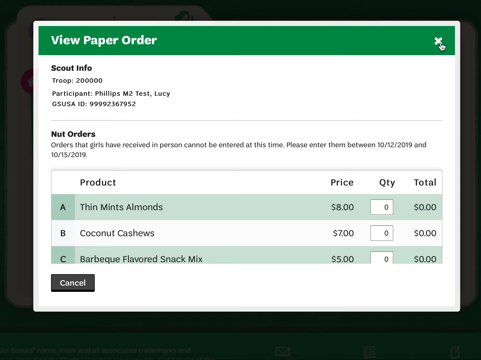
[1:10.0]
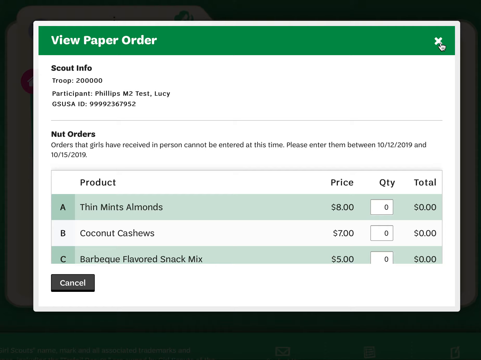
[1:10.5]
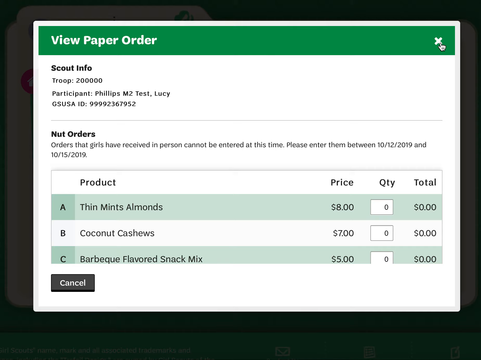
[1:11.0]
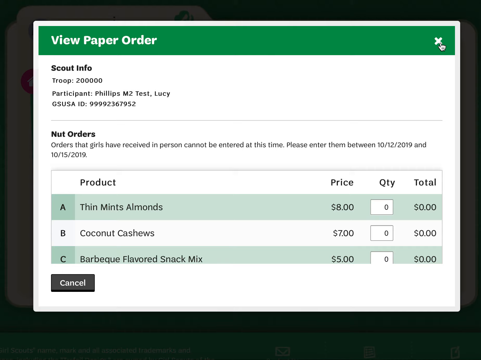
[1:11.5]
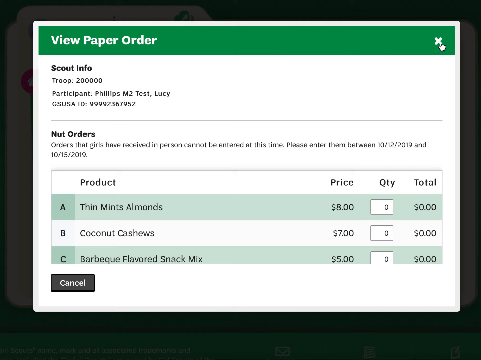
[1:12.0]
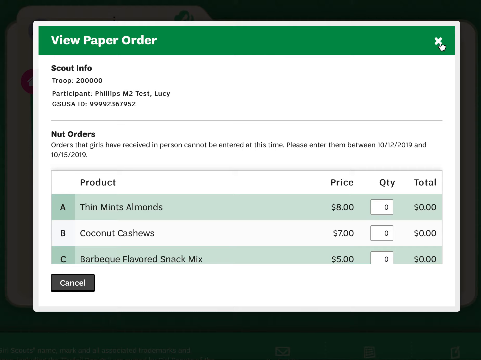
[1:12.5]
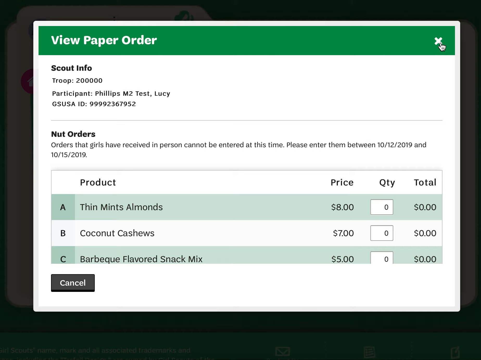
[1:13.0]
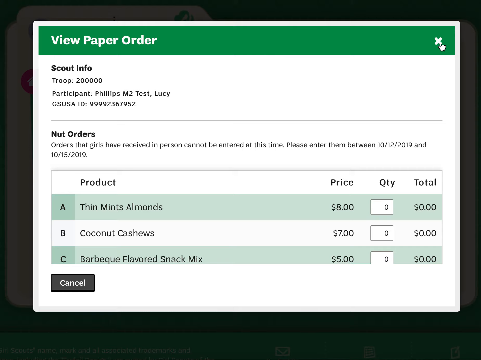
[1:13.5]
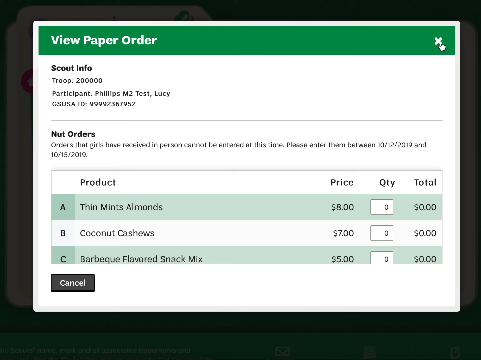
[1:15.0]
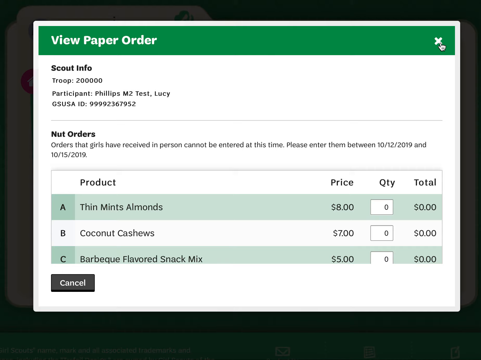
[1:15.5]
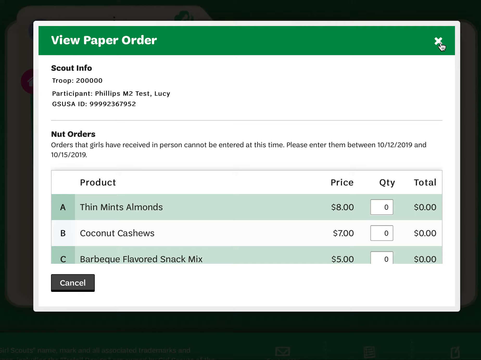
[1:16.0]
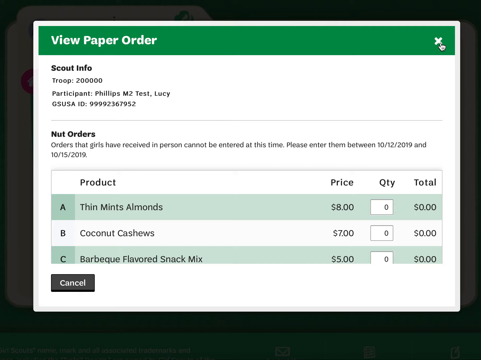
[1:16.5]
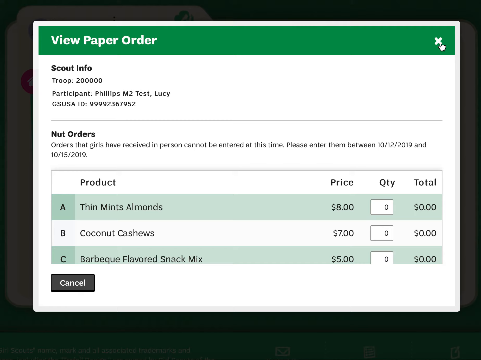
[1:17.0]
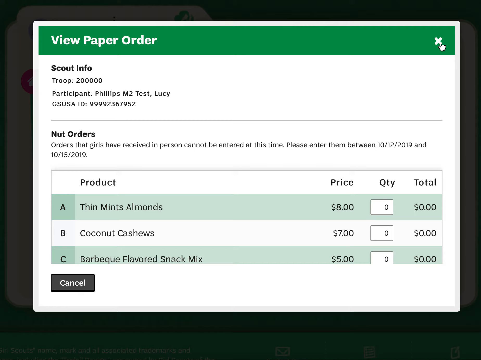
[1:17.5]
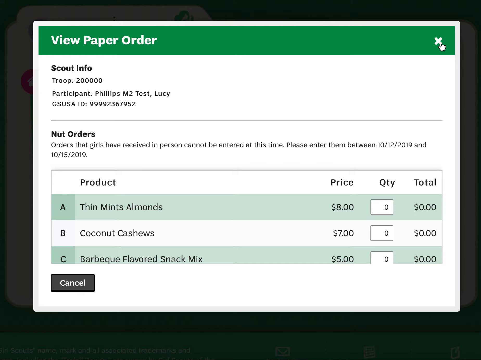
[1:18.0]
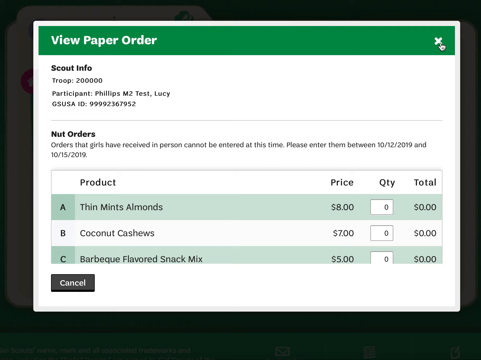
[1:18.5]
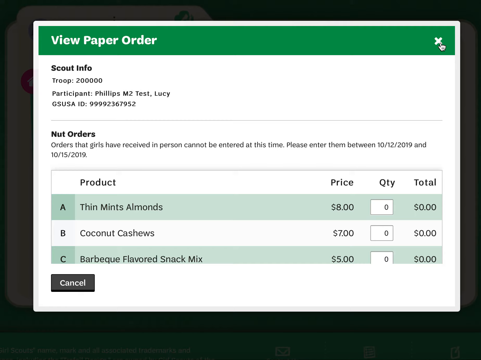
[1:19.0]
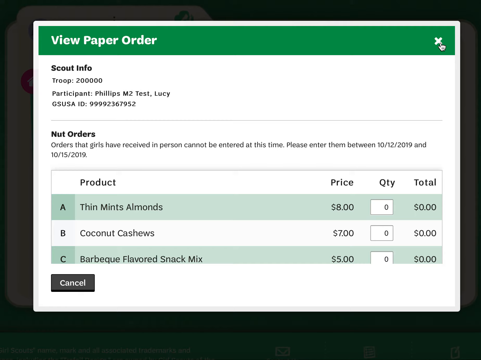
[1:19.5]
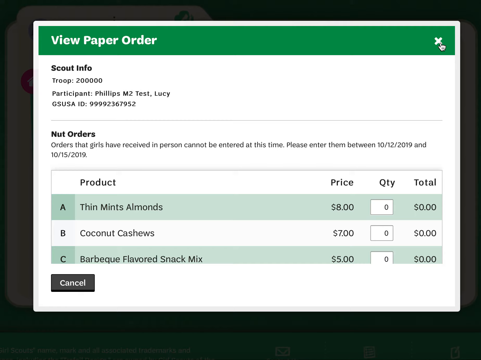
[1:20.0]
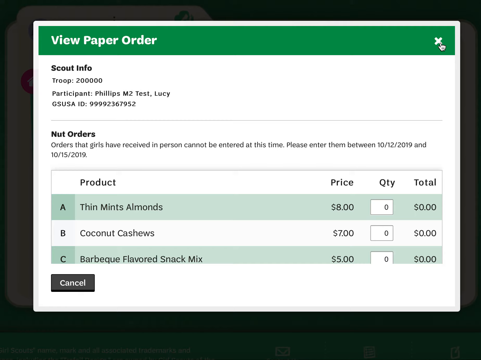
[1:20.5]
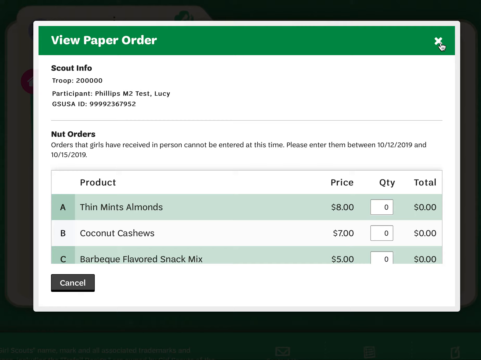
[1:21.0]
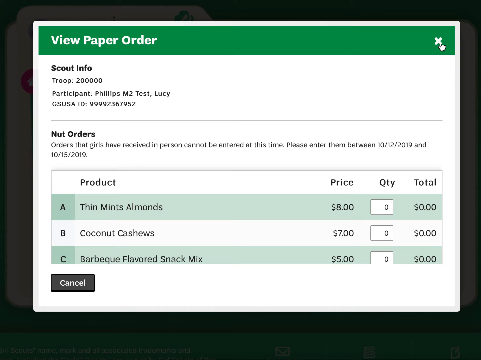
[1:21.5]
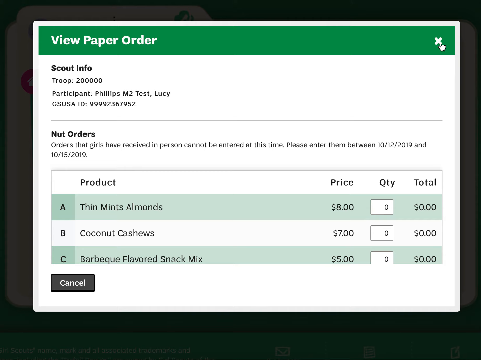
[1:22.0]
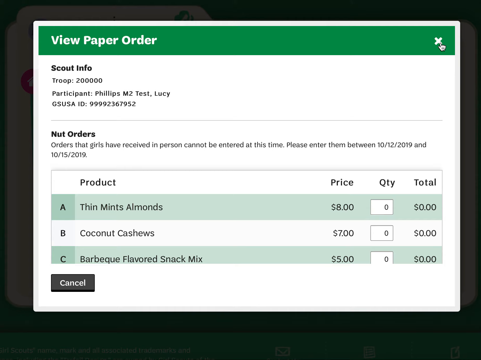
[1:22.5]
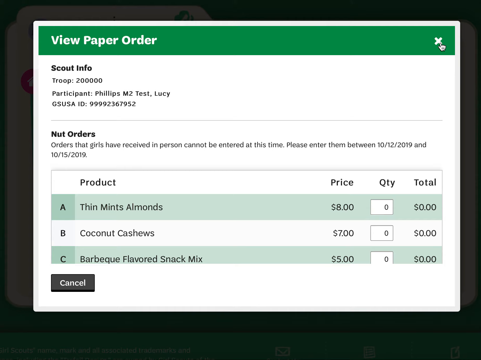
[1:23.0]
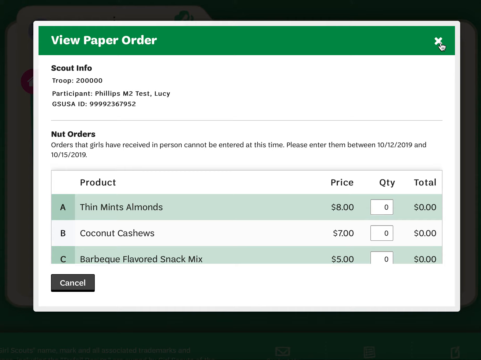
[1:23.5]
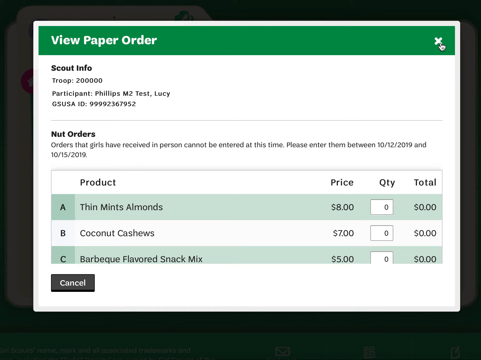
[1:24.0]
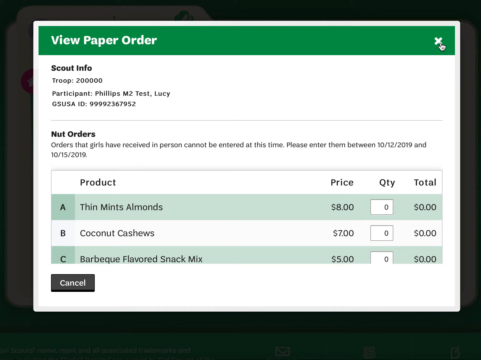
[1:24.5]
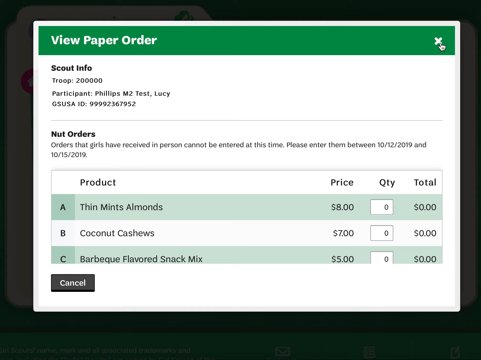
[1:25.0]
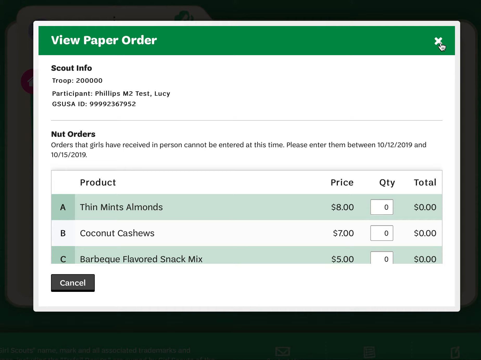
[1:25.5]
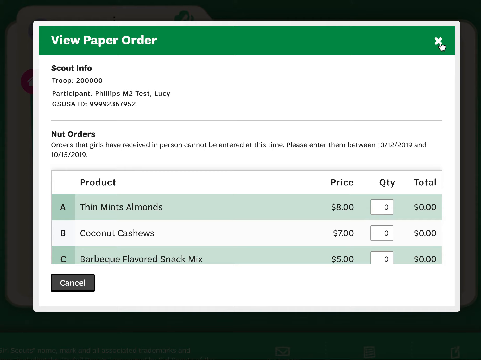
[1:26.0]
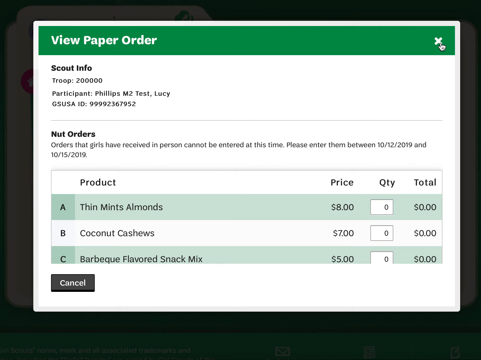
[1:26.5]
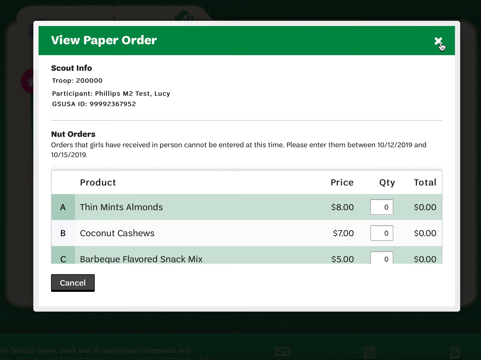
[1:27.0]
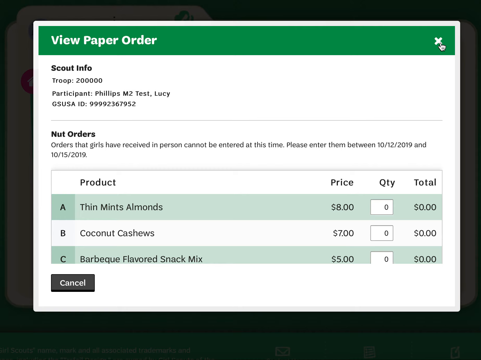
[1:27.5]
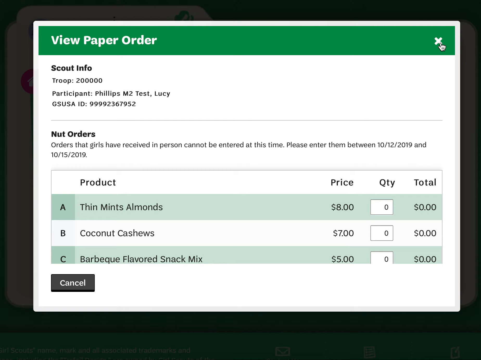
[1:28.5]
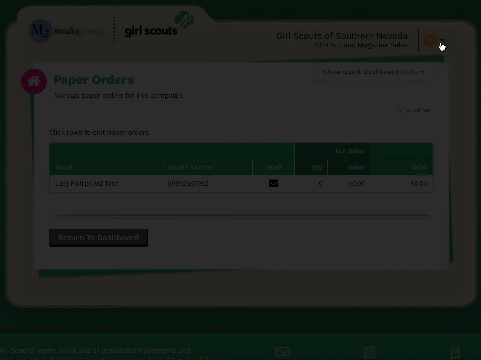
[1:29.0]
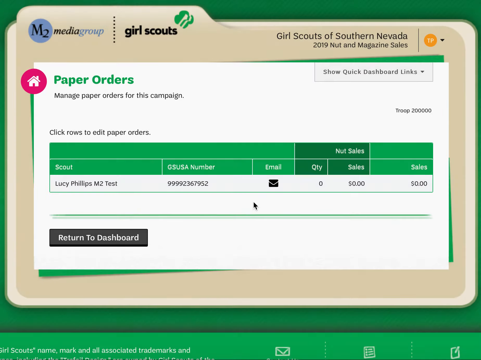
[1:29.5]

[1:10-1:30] The mouse cursor has changed into a clicking hand hovering over the cross in the top right. The mouse clicks the cross, the page closes, and it returns to the homepage. The homepage is visible briefly, showing the original info including all the titles and the folder-shaped homepage menu. It has "paper orders" written on it and a small black-grey box in the bottom right reading "return to dashboard". There is text all over the screen, and the colors used are white and green. The very back background is a darker green, and in the top left are two logos, M2 Media Group and Girl Scouts. At the end, the mouse is in the center bottom of the screen.